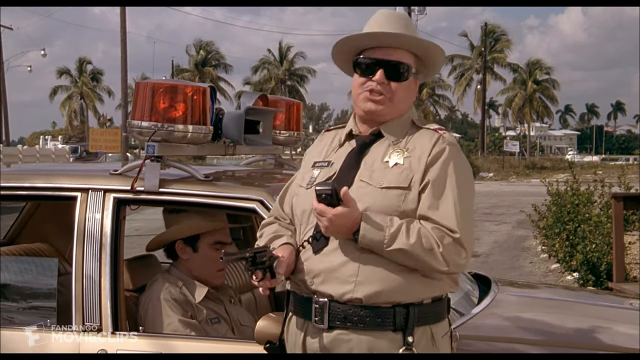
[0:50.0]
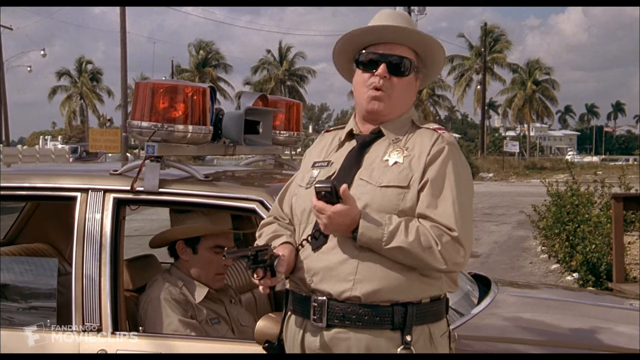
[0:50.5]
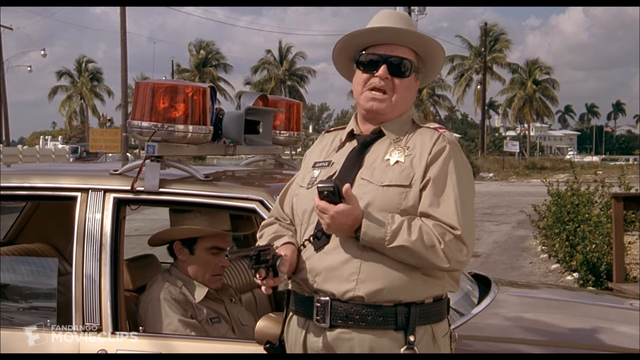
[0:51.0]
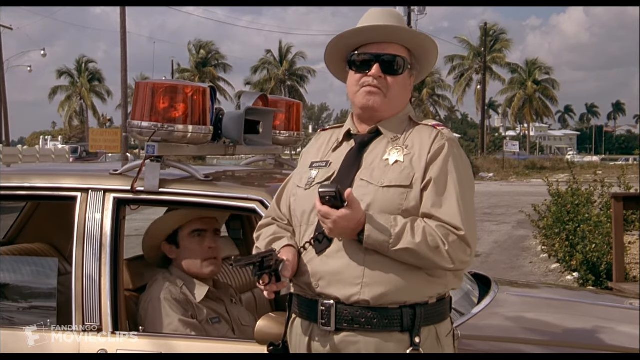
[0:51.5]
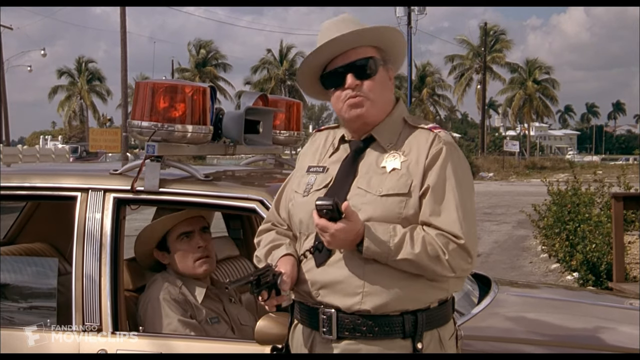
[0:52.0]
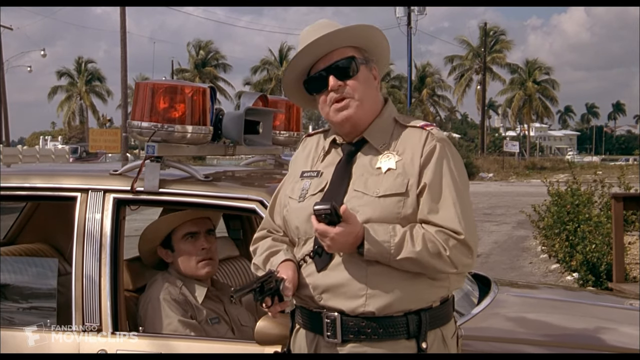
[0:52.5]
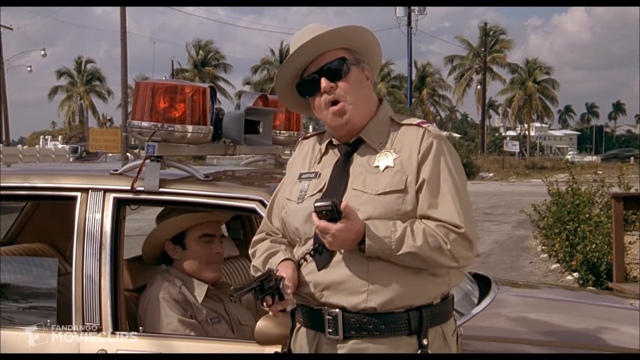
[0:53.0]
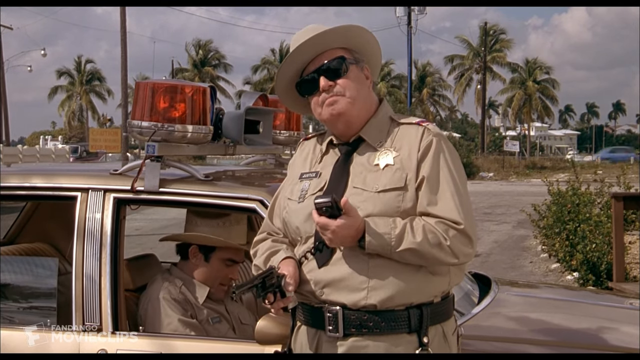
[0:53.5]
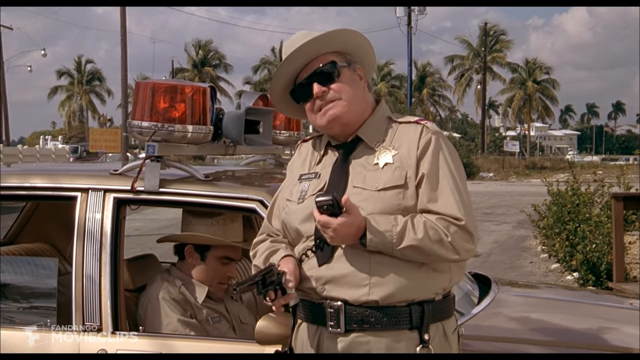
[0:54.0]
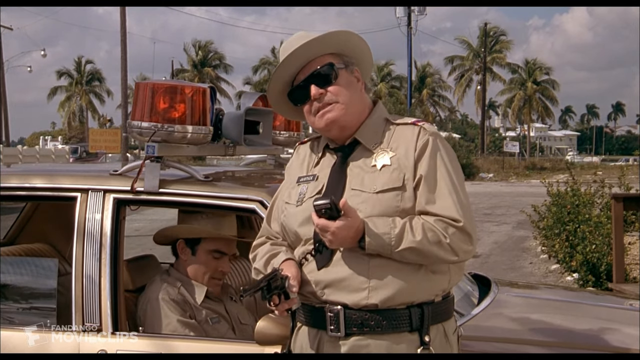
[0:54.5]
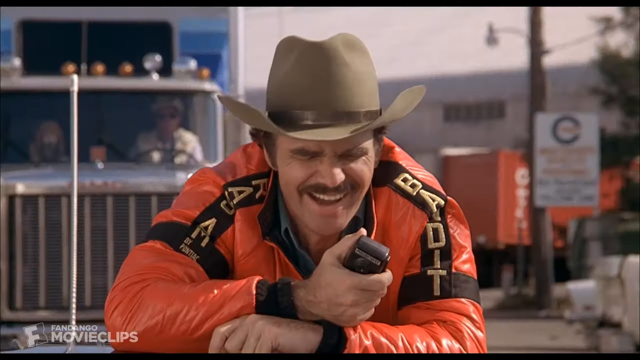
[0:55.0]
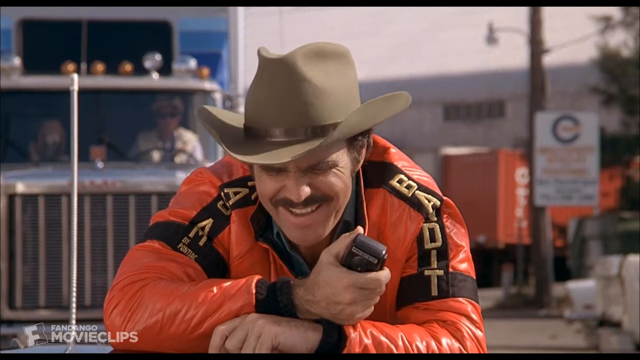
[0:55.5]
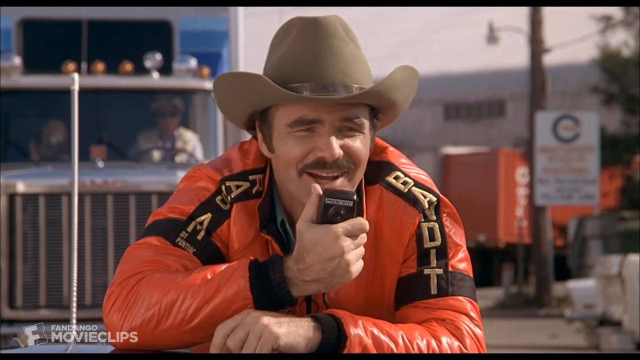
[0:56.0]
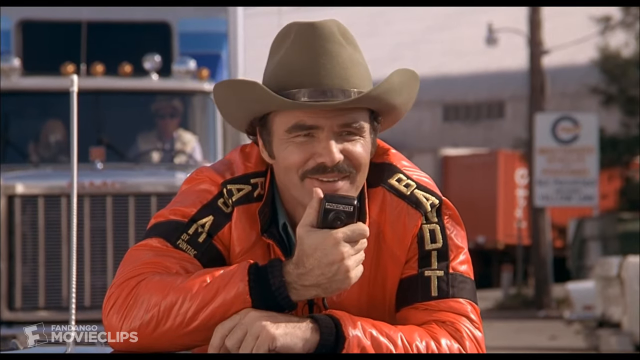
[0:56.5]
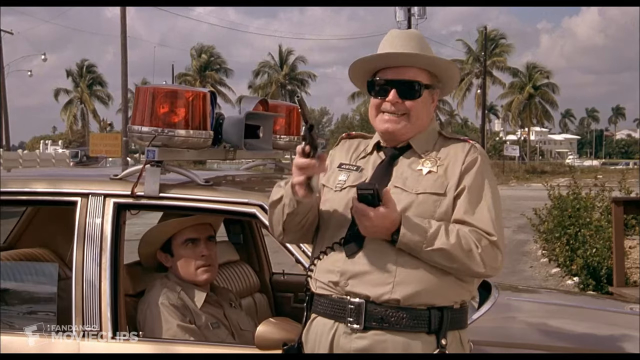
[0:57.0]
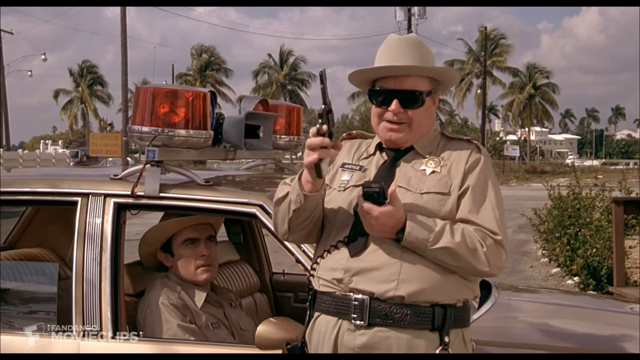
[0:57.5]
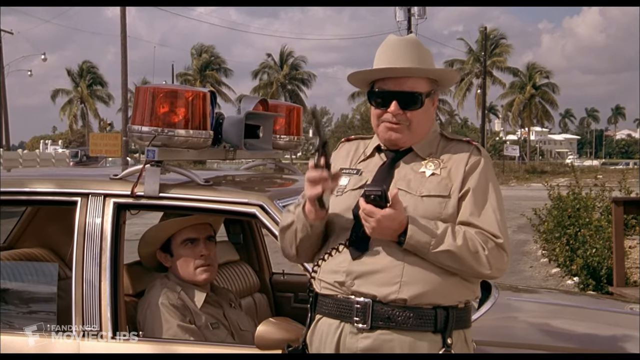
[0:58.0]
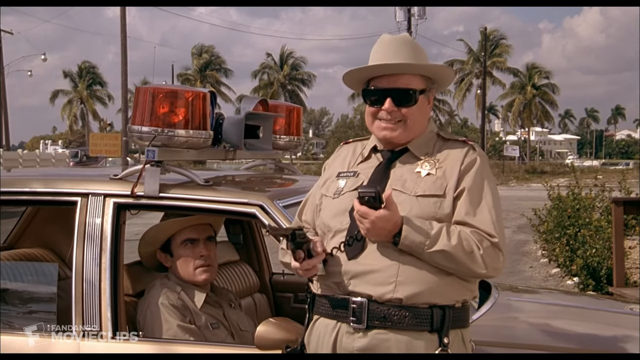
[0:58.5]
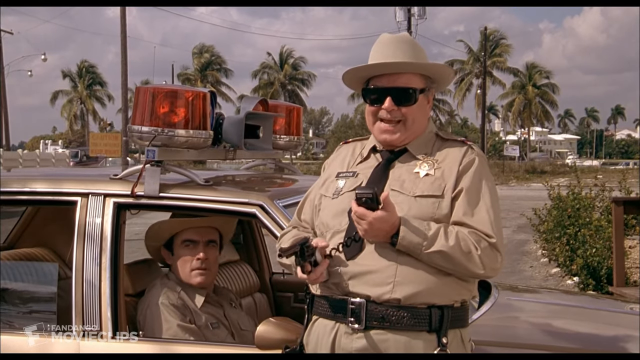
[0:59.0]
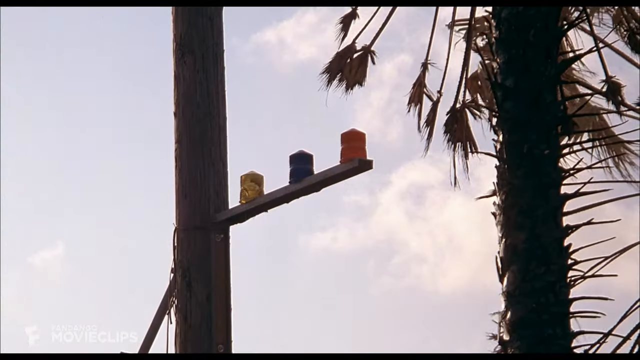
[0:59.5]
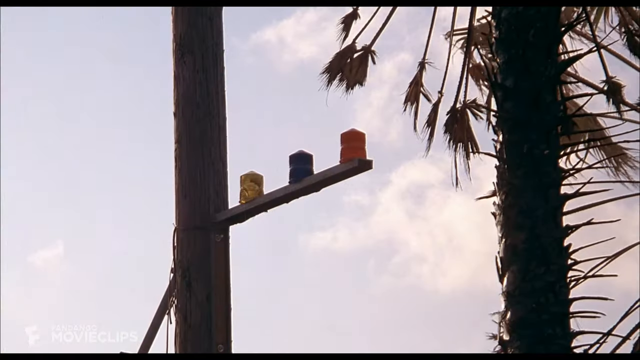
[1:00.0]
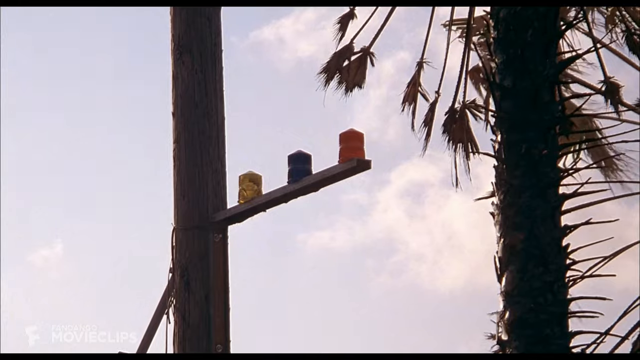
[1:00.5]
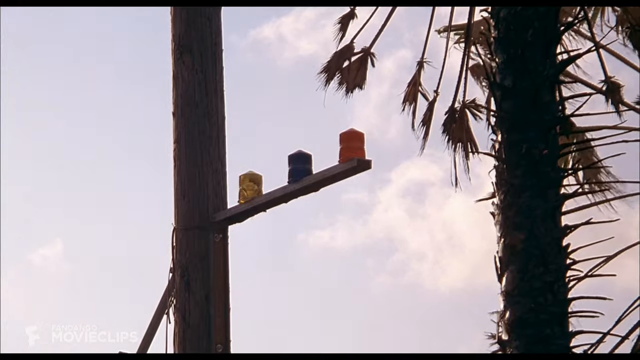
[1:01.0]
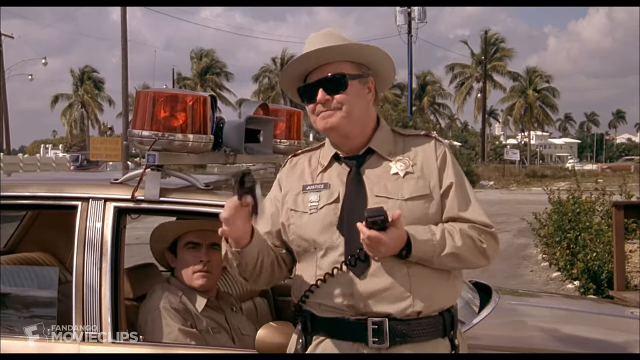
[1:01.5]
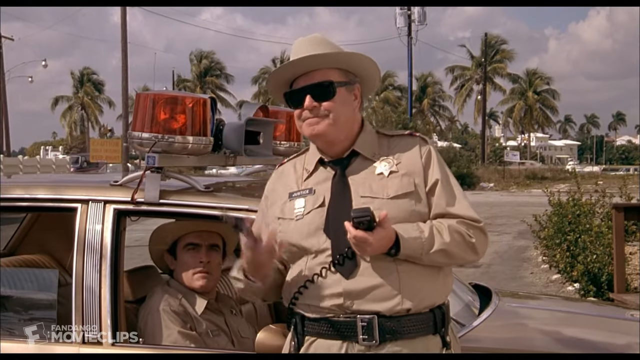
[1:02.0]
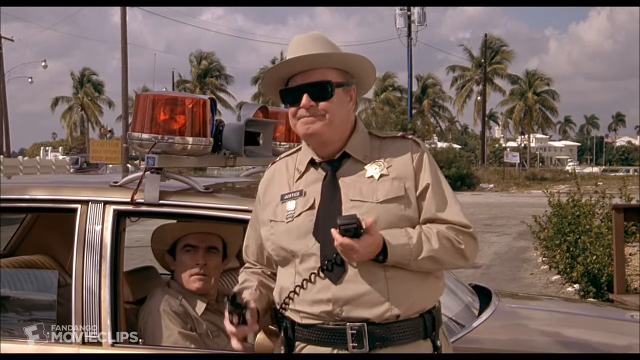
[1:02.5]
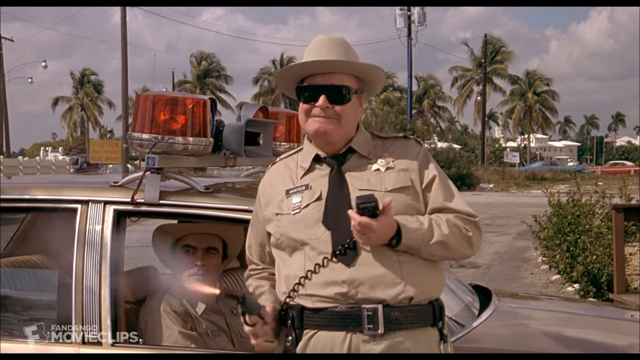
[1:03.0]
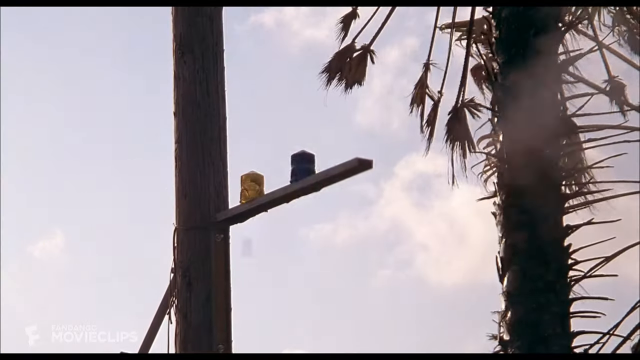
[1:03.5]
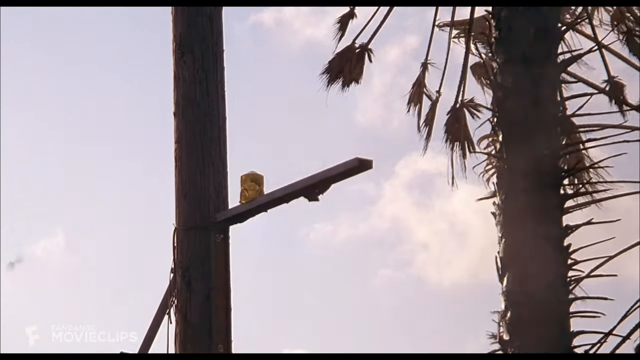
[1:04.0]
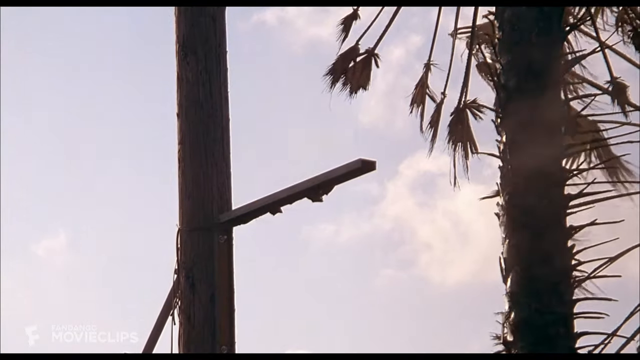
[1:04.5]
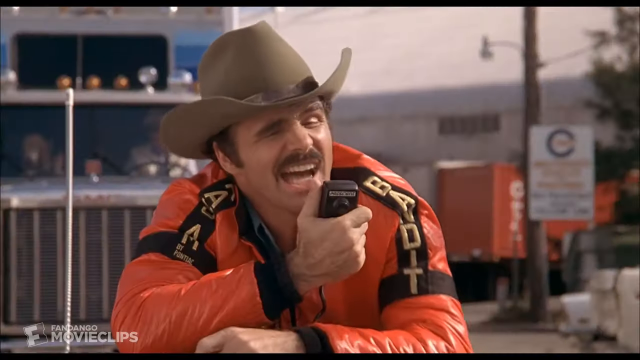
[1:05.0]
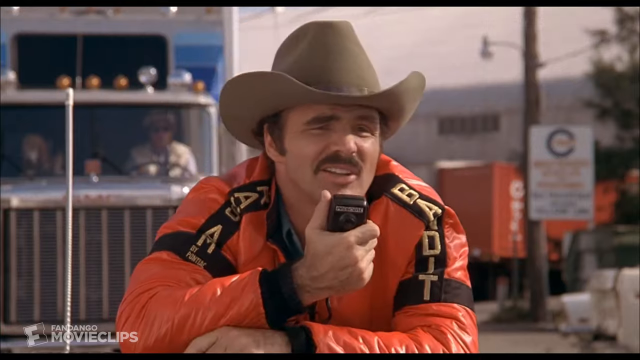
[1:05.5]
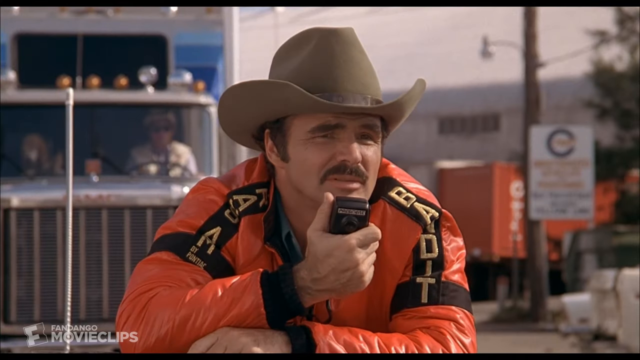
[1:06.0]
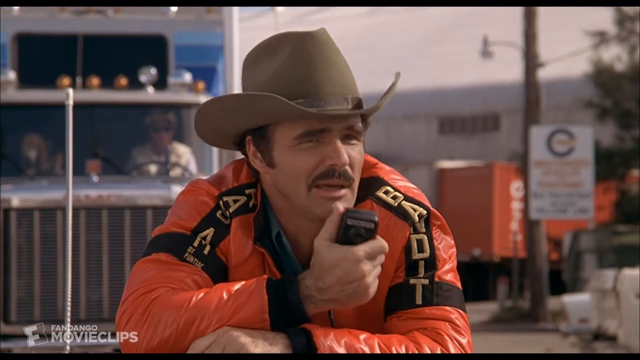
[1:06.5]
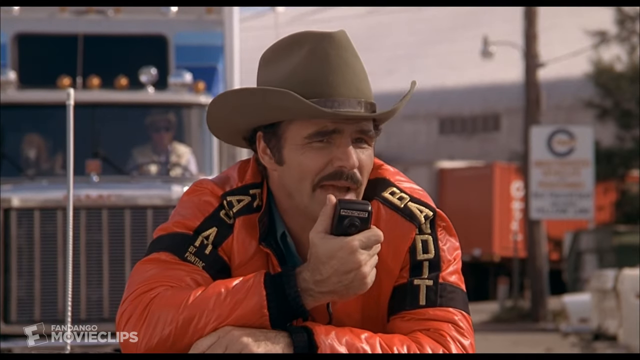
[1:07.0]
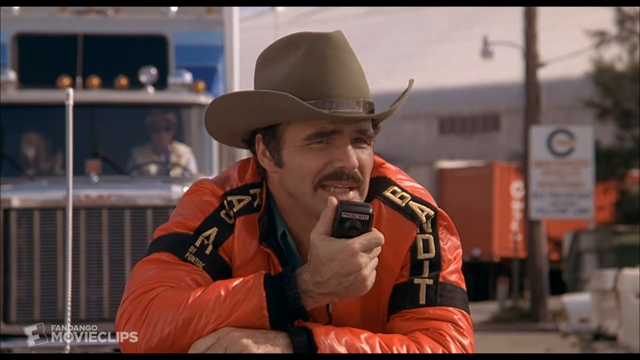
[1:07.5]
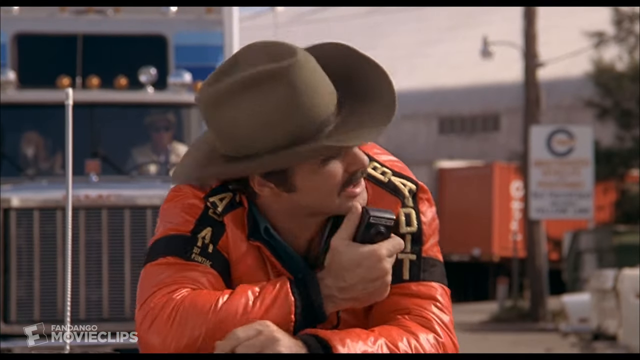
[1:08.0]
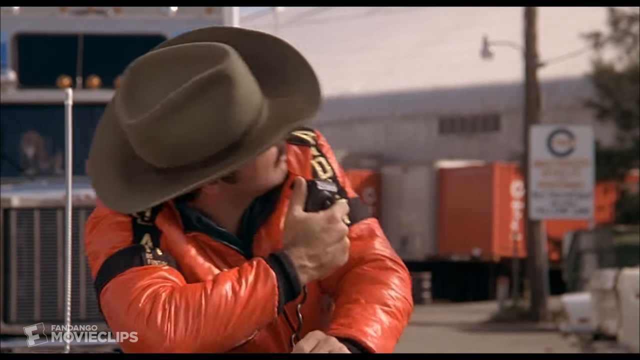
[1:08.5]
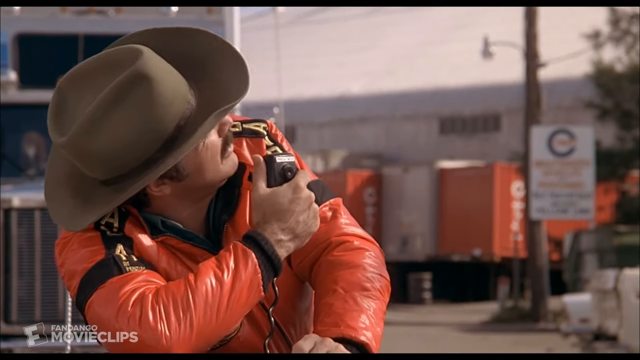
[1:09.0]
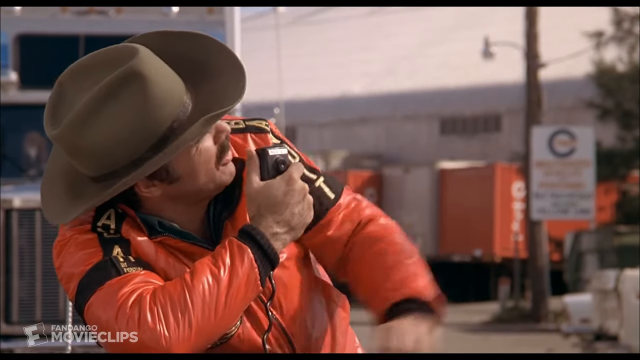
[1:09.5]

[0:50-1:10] The police keep talking, and the policeman outside the car, who is a little chubby, starts to scream. The man in orange clothes laughs sarcastically; he has a very big moustache and wears a cowboy hat, seeming to be someone from the countryside. Behind him, a very big truck is coming, with a driver and a dog inside. He keeps laughing at the policeman and seems not to like what the policeman is saying. The policeman turns his revolver and shoots at things in the surroundings, apparently to intimidate the driver, hitting the three things he shoots at on the first try.